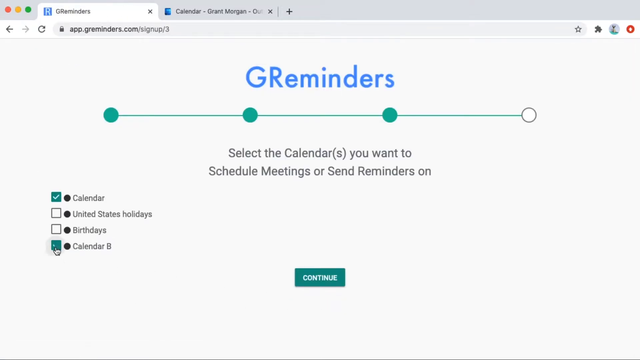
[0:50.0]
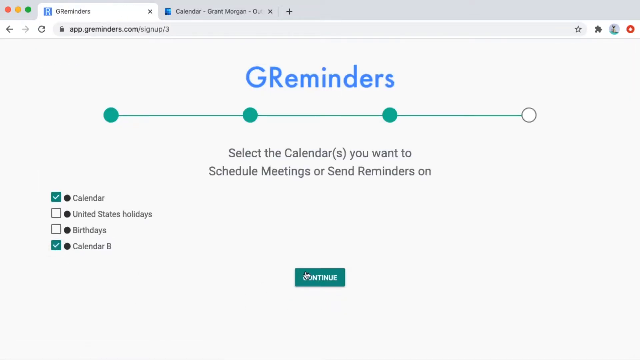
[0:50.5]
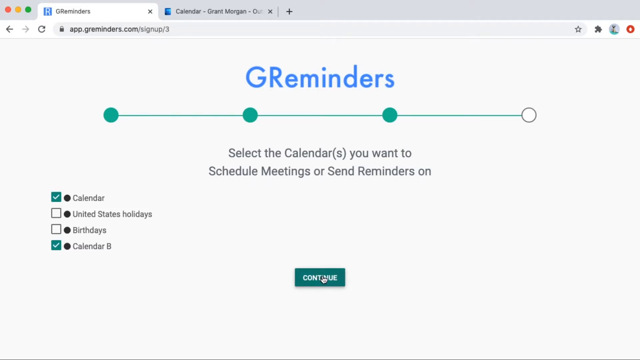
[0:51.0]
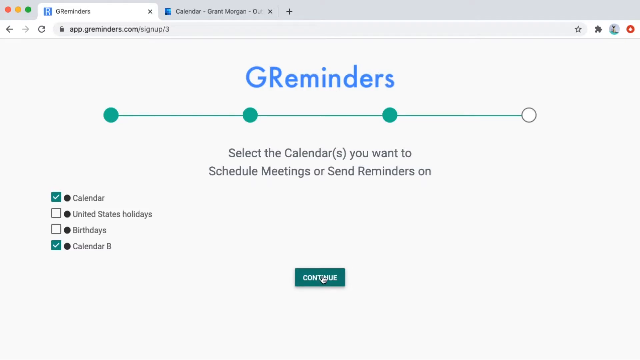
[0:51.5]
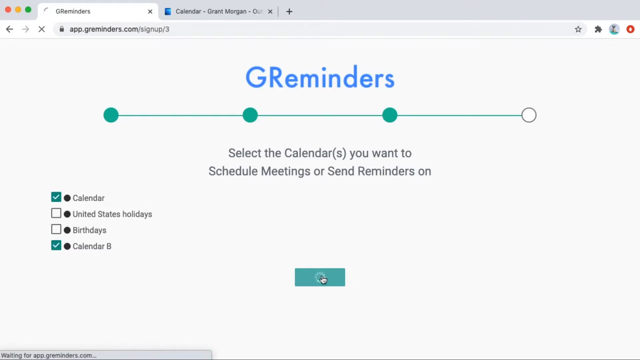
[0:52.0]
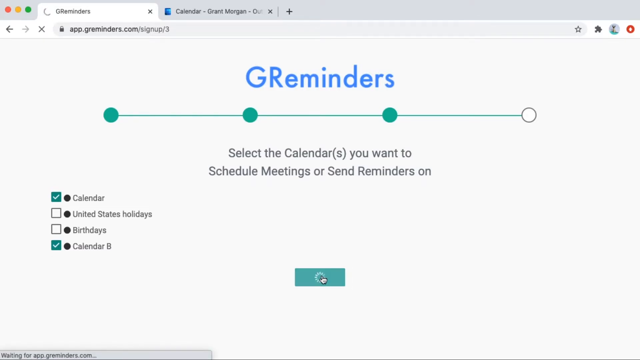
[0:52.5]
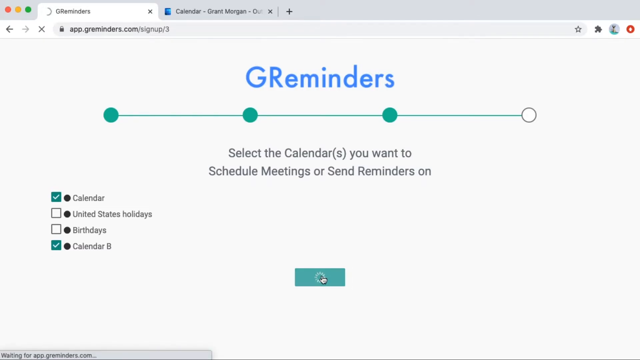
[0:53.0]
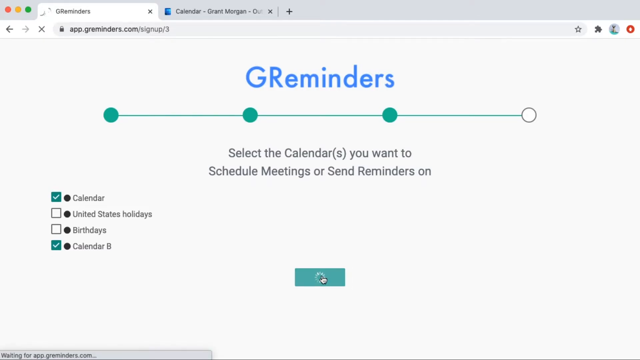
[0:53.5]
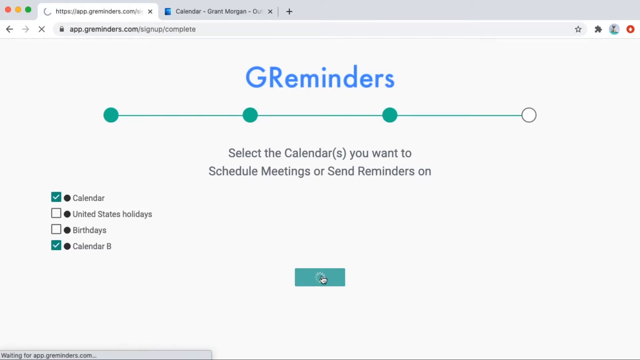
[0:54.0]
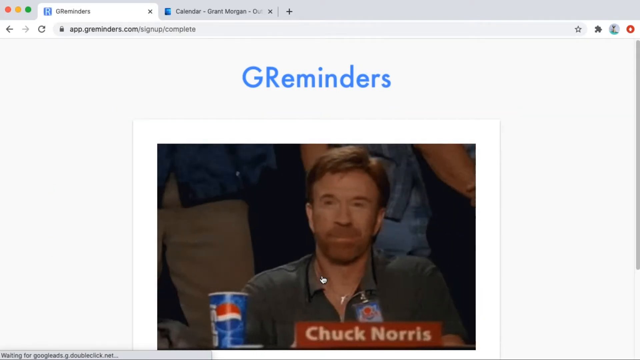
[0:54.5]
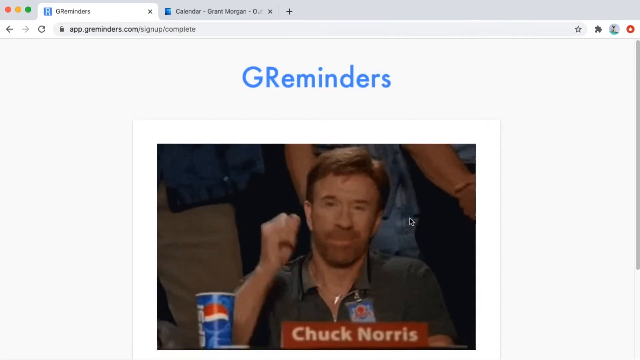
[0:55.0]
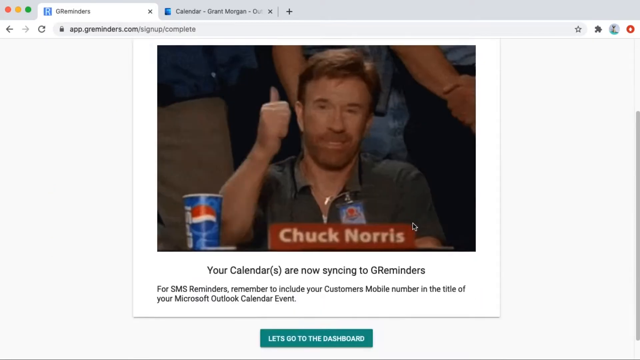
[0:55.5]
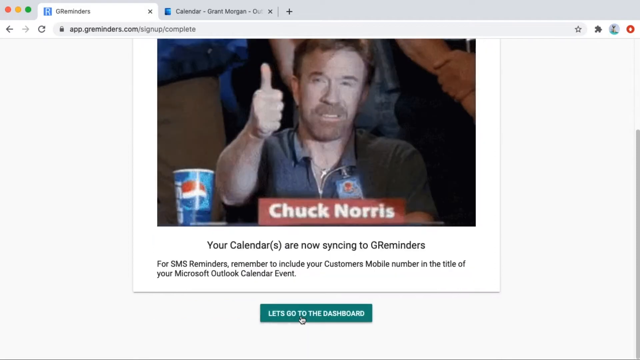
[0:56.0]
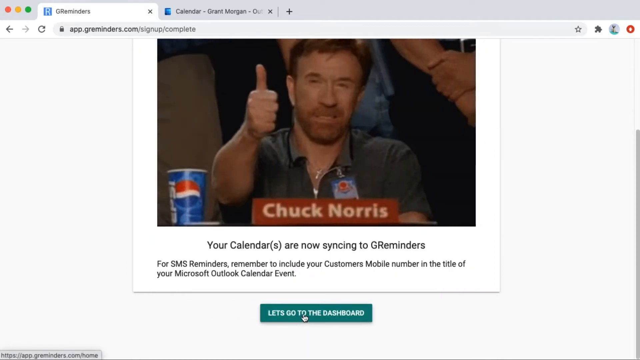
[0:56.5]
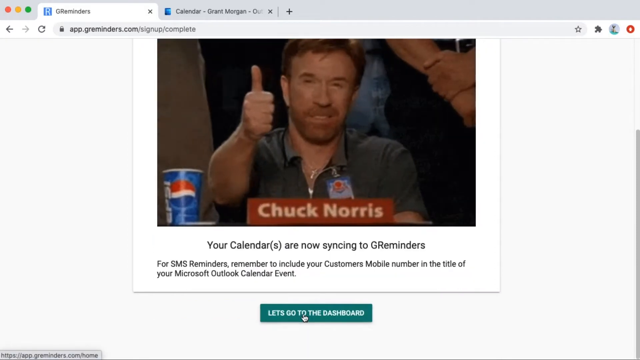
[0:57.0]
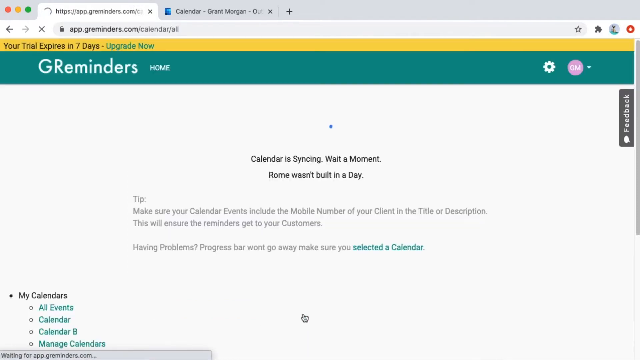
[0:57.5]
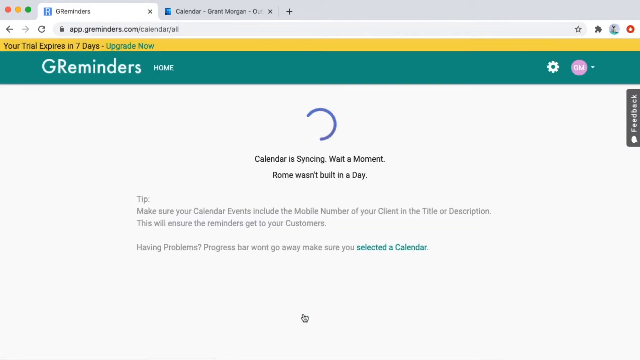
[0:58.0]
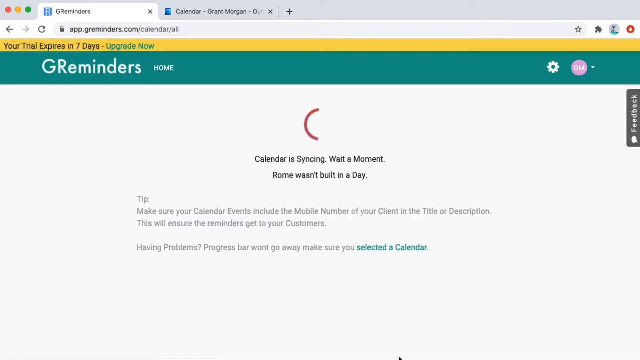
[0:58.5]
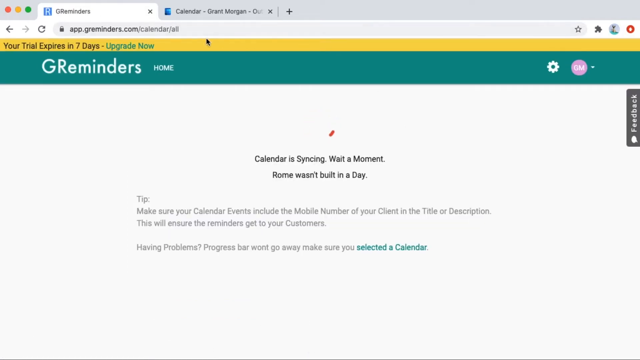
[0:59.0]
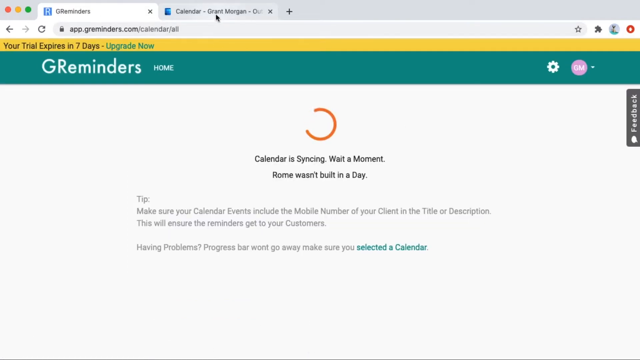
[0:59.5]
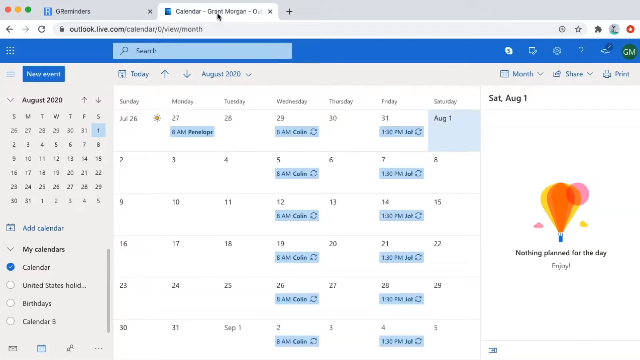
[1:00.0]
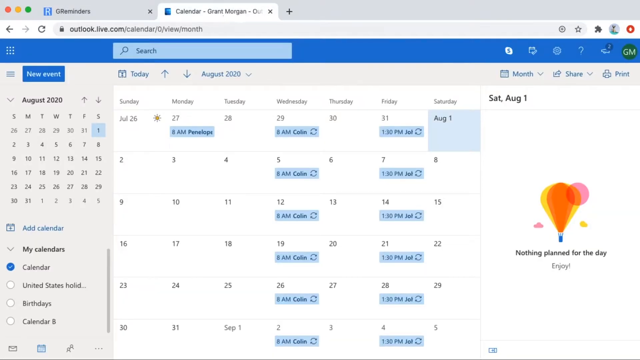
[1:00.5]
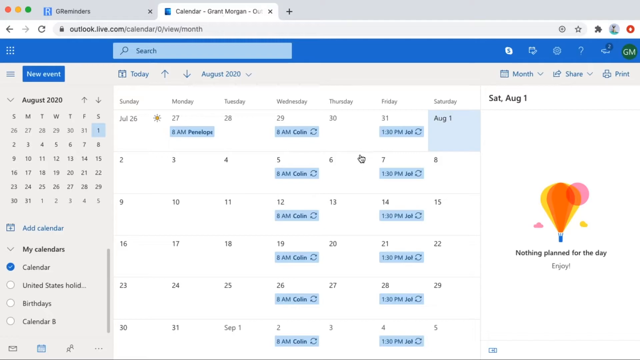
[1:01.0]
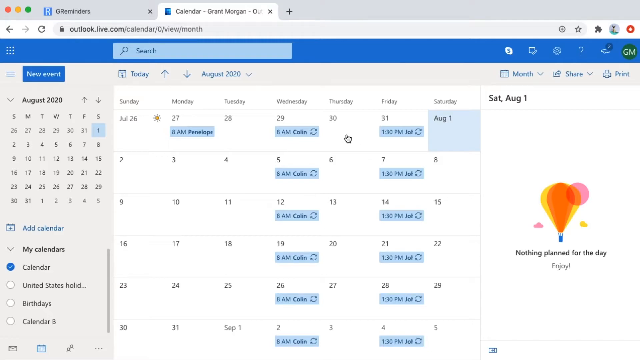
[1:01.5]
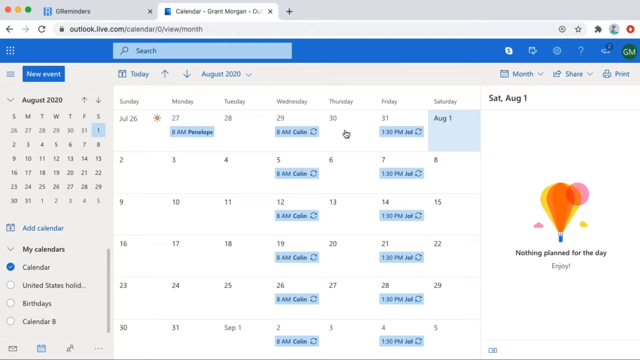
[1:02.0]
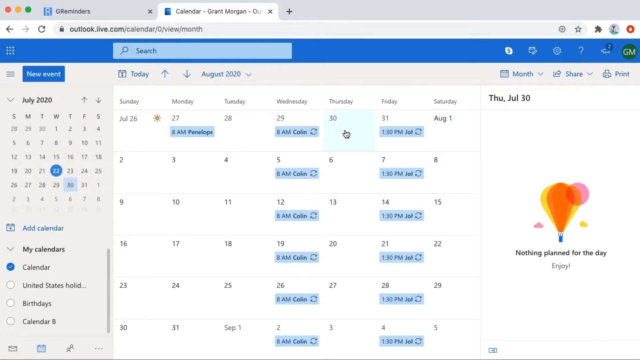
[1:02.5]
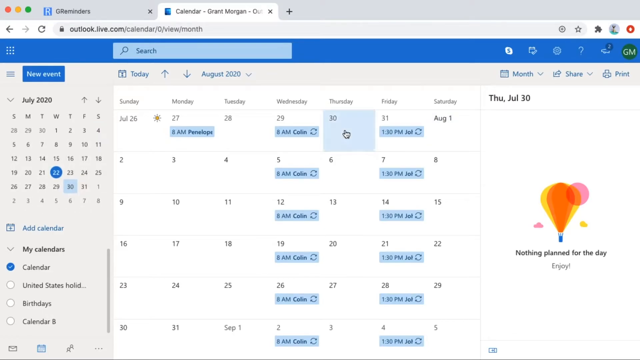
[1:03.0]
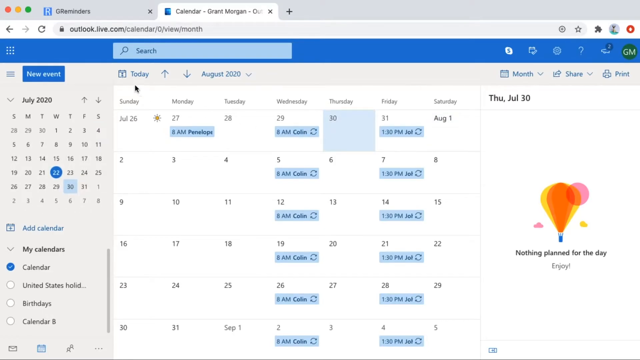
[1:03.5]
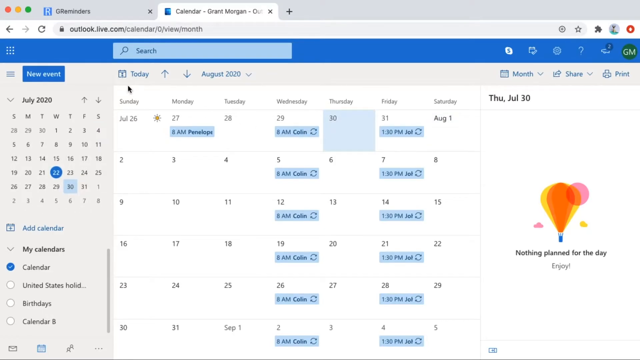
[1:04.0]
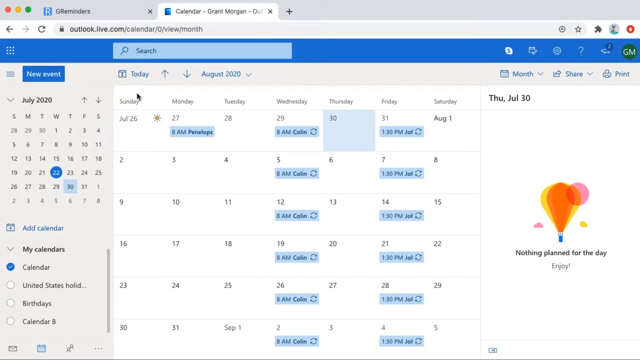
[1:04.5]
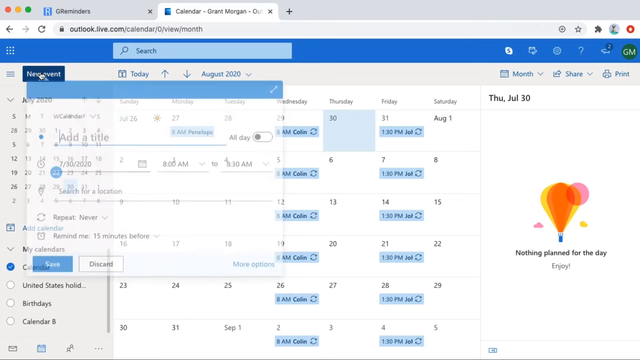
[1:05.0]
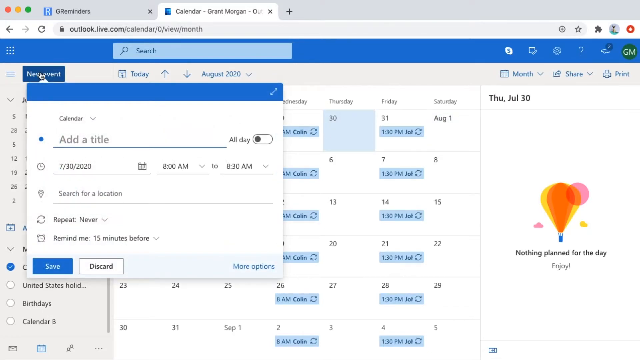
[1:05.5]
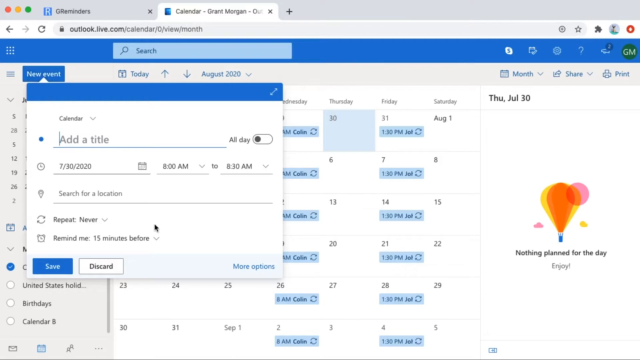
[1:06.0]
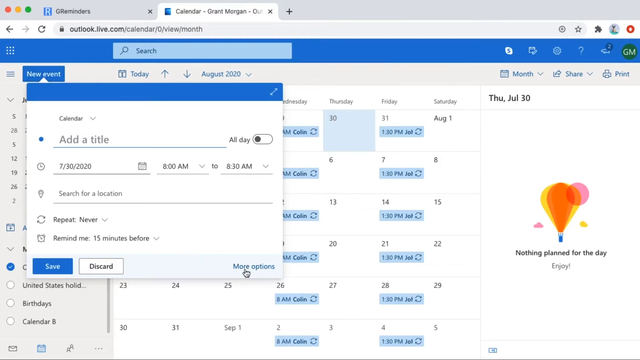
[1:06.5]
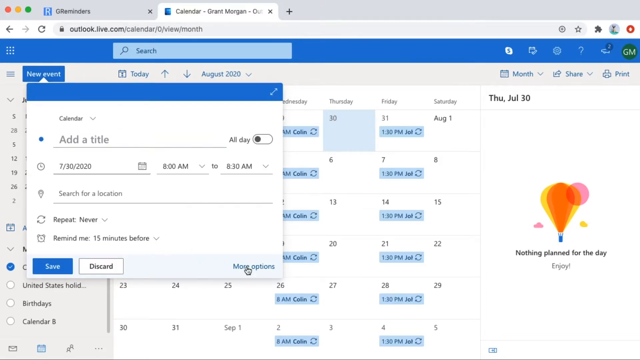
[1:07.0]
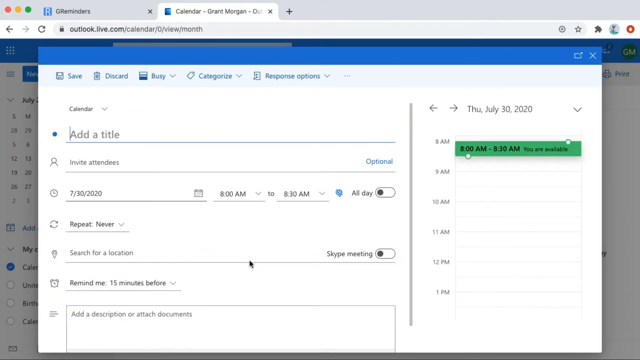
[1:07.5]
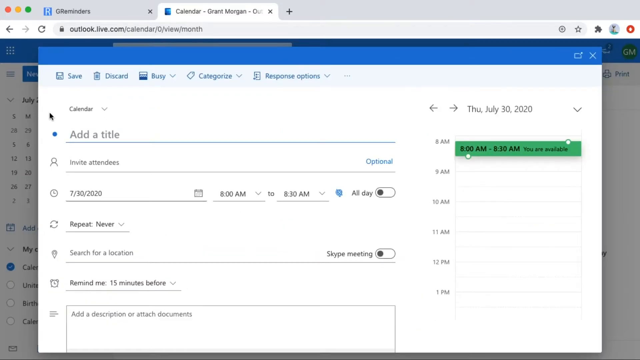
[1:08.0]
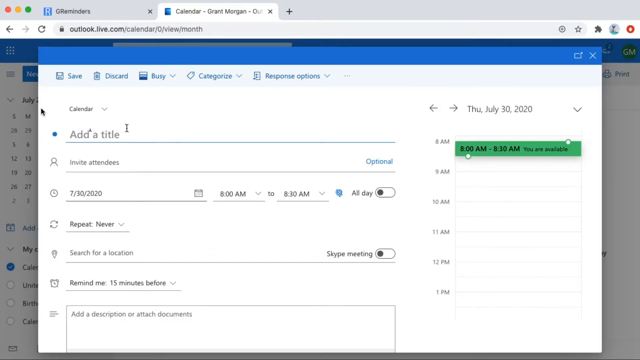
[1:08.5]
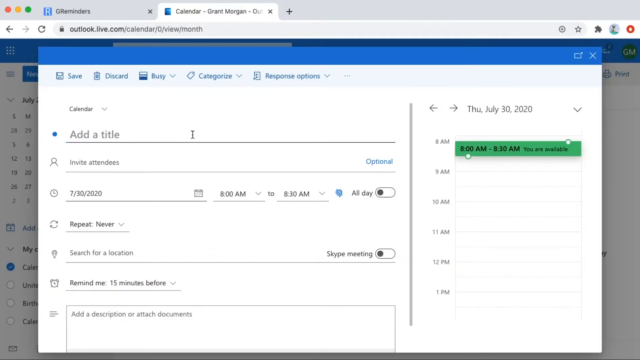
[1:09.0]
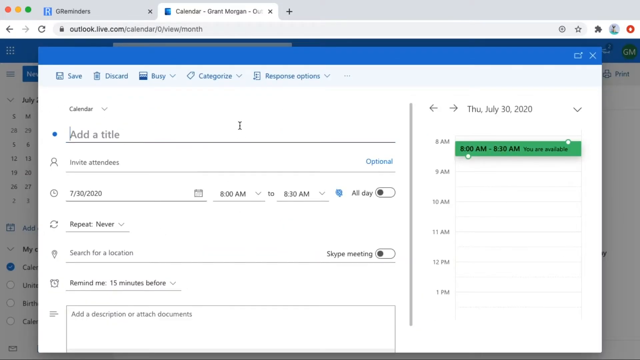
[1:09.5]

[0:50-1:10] The person is asked to select the calendars he wants to schedule meetings with, and he chooses calendar and calendar B. Next, an image of Chuck Norris giving a like appears with information that his calendars are now sending to G-Reminders. An option for SMS notifications is shown, but he does not use it. He then goes to another tab with Outlook Live and his calendar, which has some notifications, and clicks new.